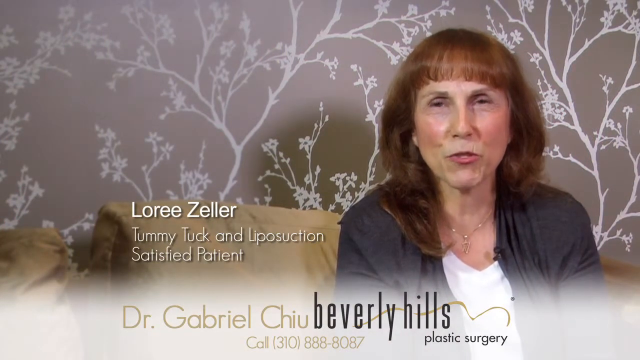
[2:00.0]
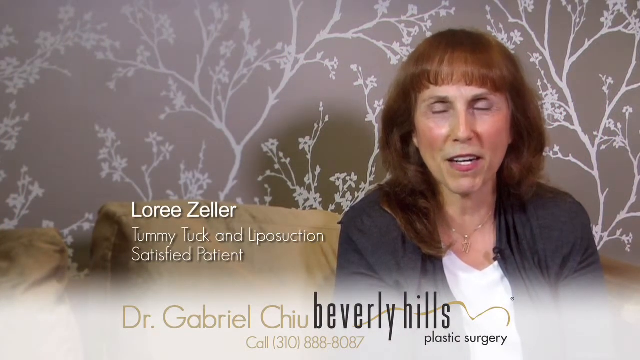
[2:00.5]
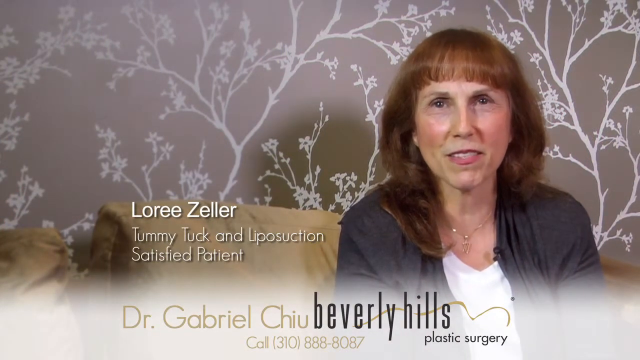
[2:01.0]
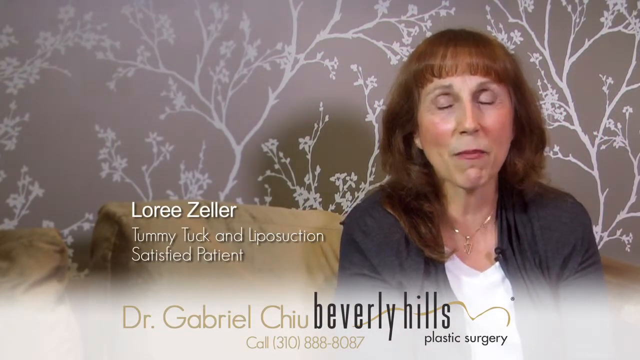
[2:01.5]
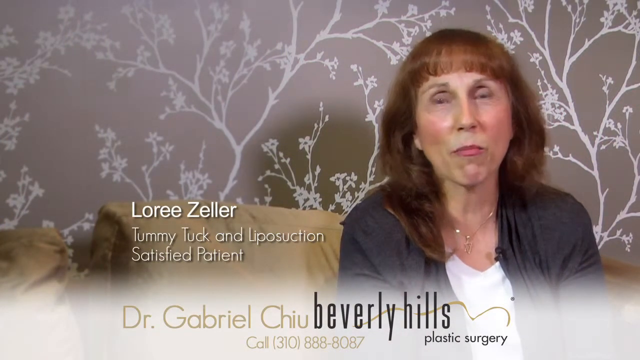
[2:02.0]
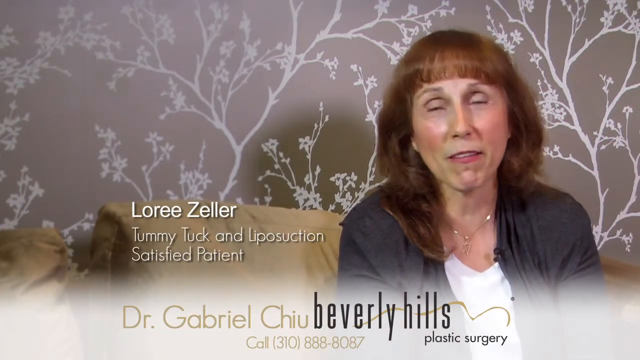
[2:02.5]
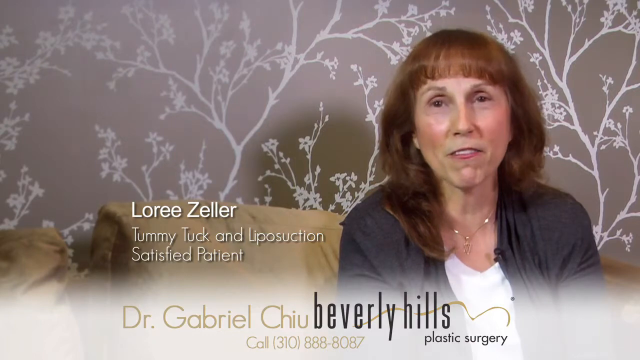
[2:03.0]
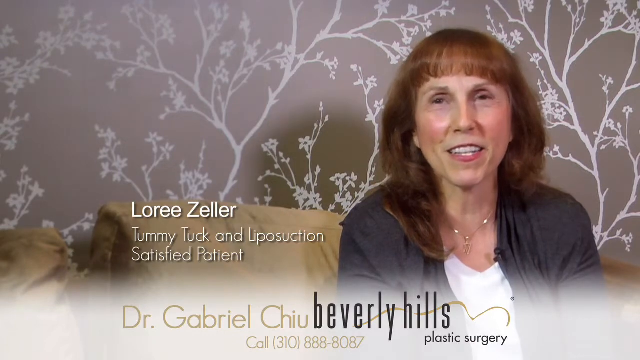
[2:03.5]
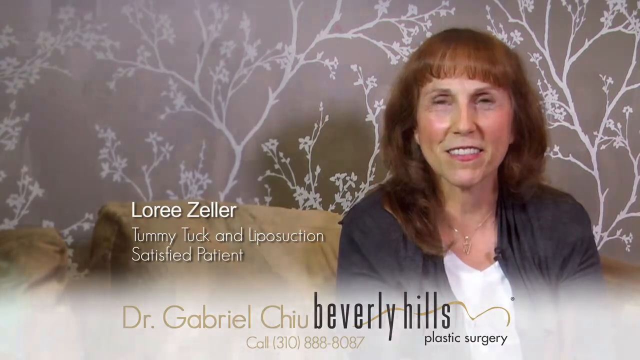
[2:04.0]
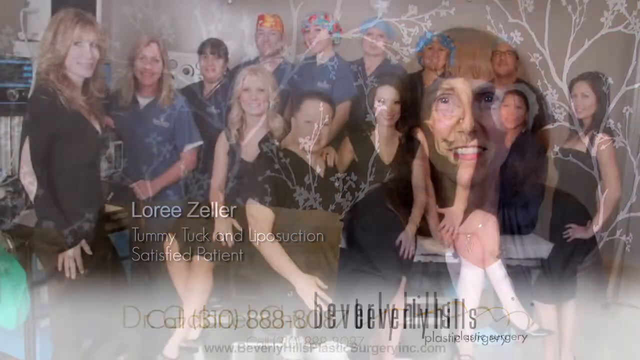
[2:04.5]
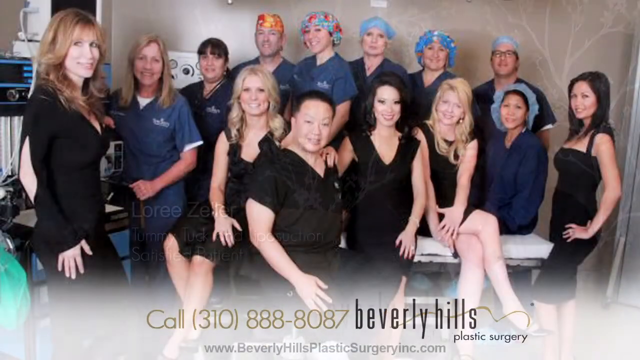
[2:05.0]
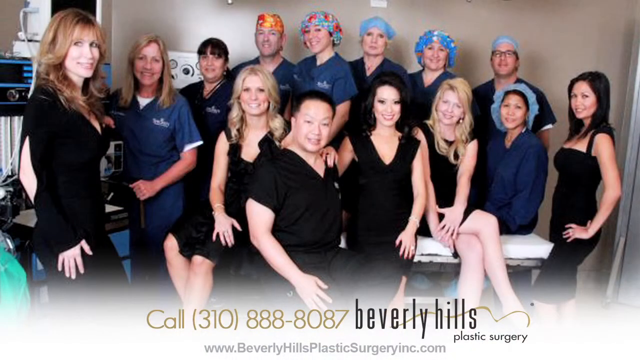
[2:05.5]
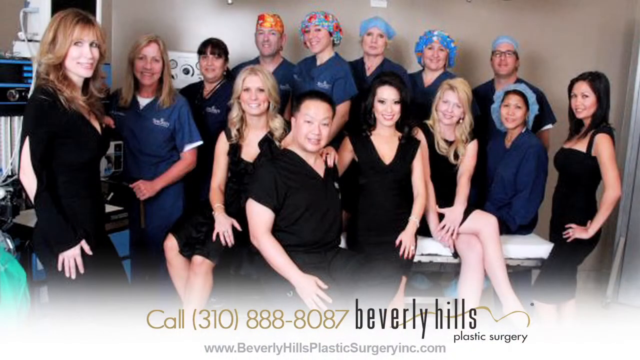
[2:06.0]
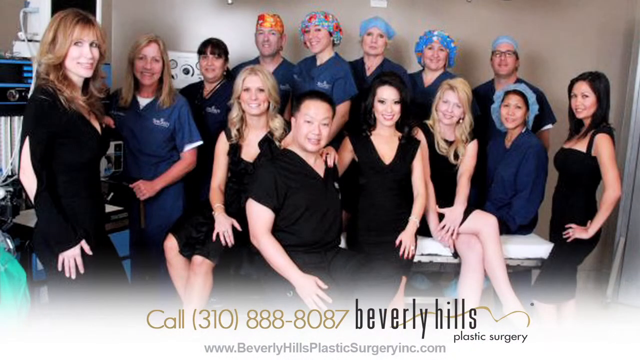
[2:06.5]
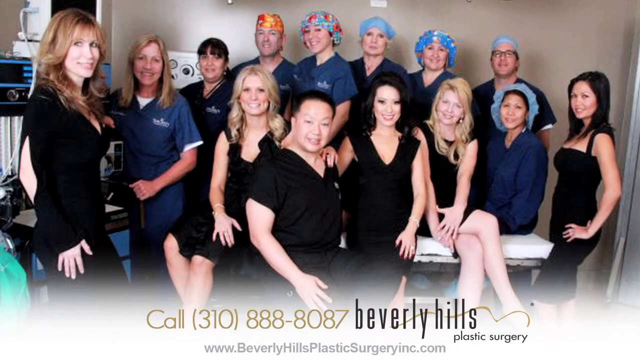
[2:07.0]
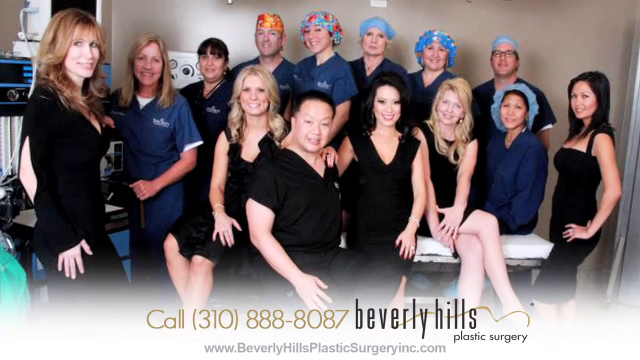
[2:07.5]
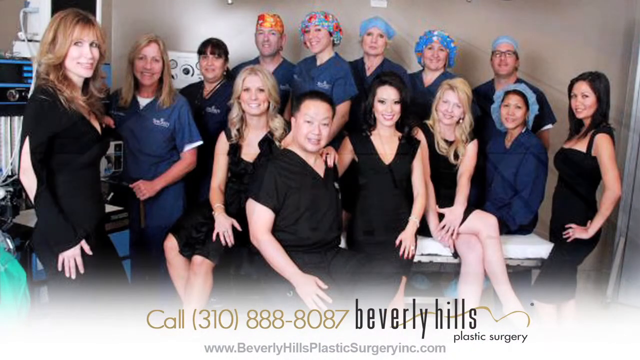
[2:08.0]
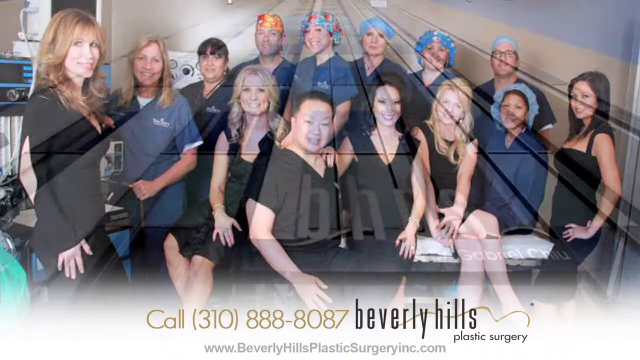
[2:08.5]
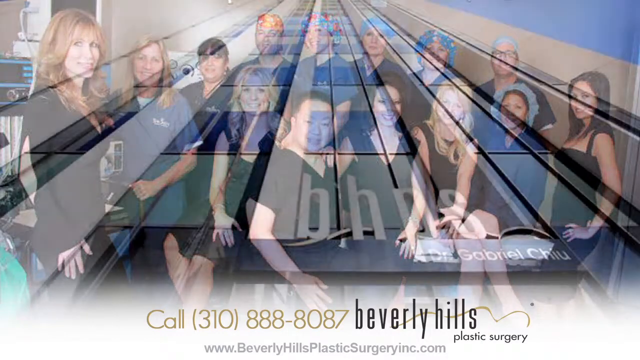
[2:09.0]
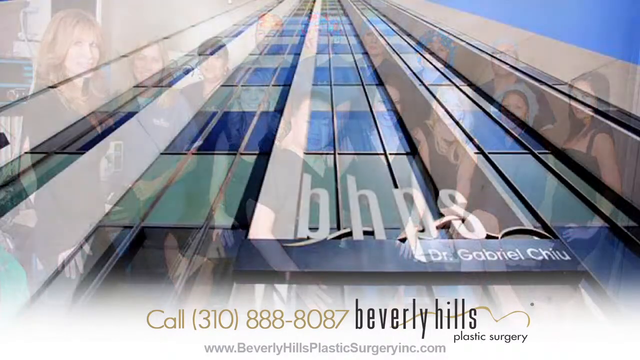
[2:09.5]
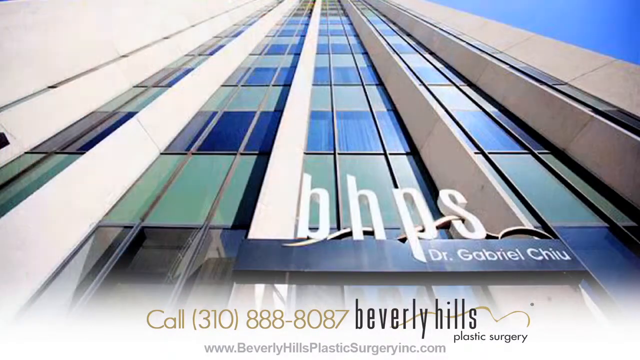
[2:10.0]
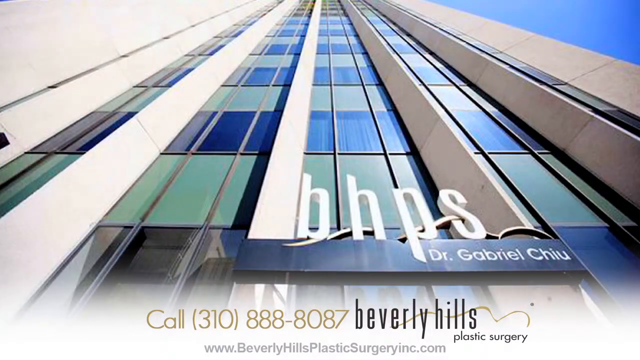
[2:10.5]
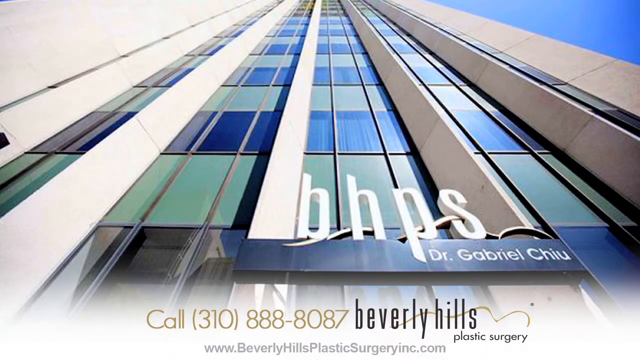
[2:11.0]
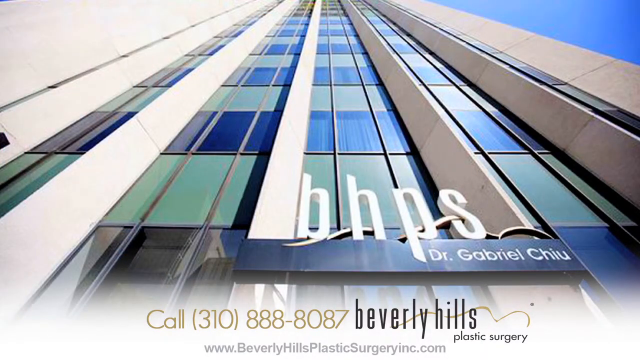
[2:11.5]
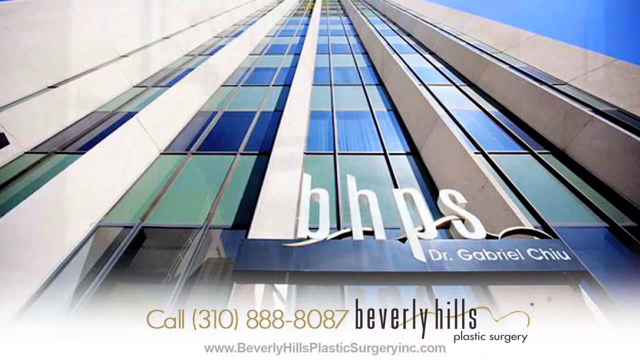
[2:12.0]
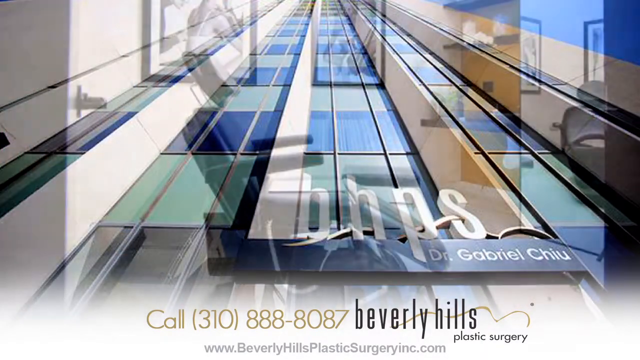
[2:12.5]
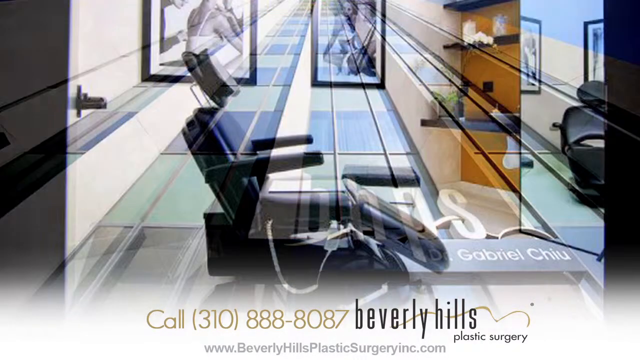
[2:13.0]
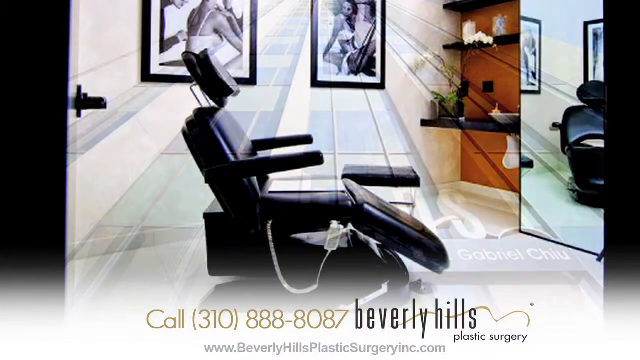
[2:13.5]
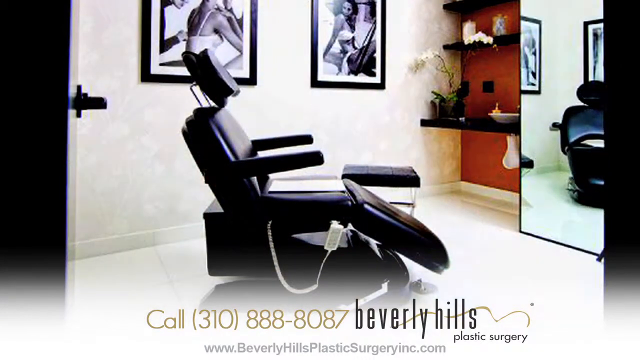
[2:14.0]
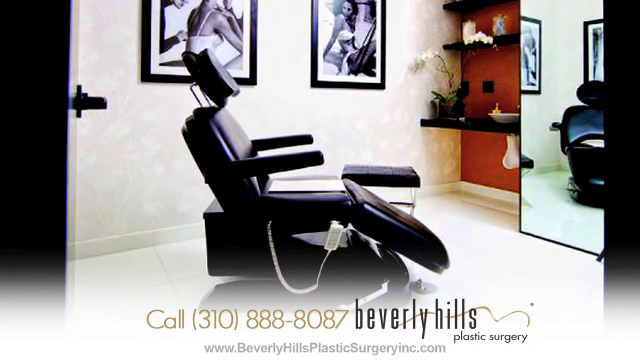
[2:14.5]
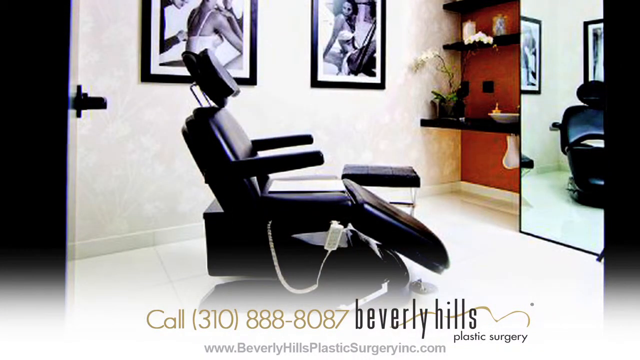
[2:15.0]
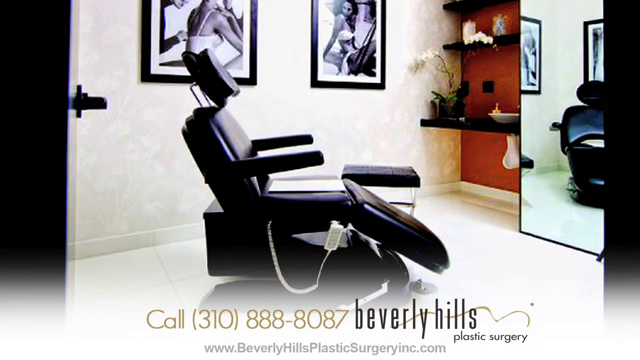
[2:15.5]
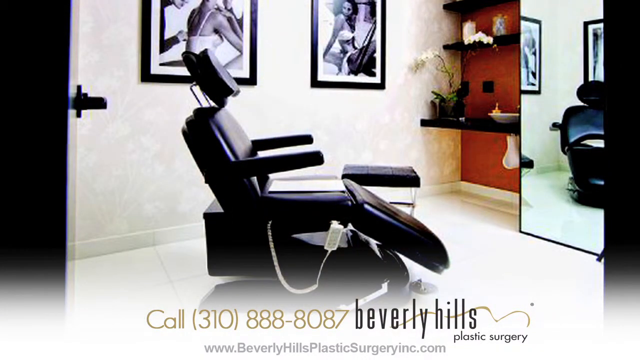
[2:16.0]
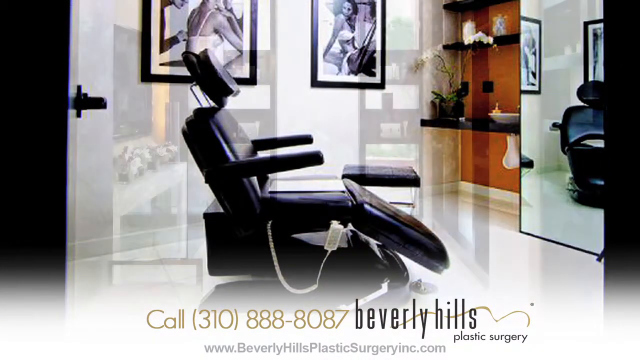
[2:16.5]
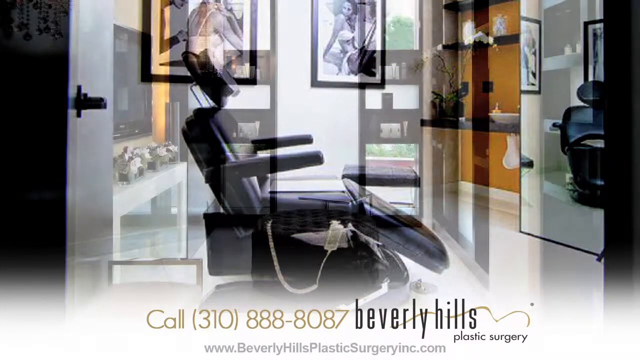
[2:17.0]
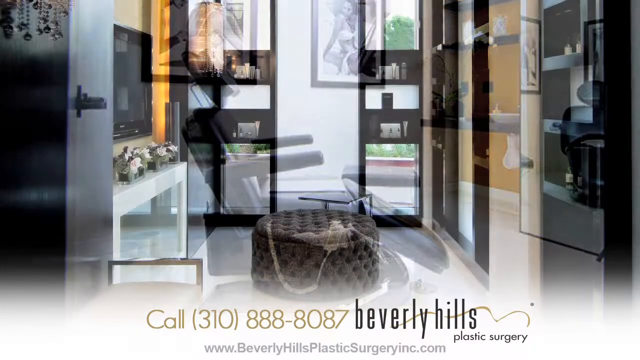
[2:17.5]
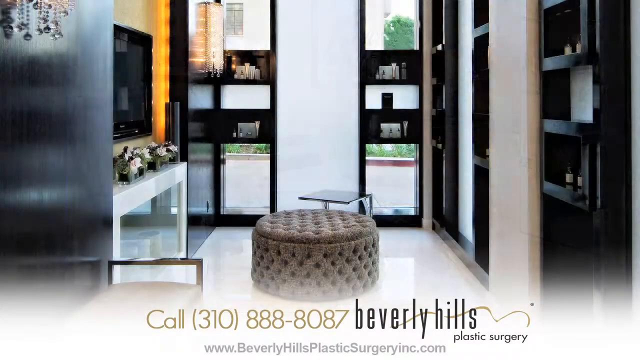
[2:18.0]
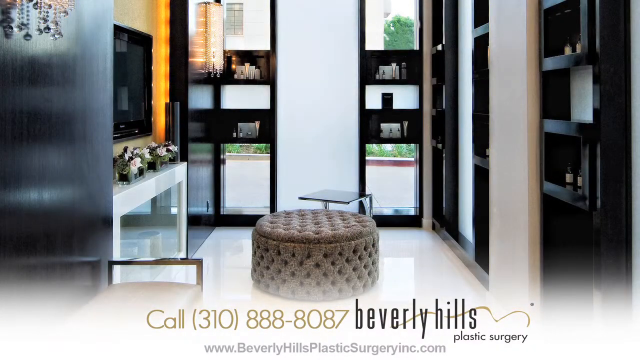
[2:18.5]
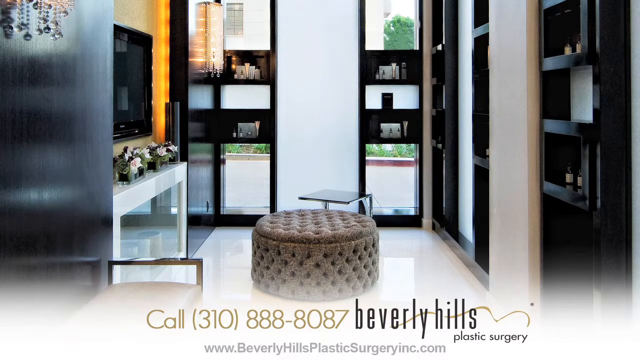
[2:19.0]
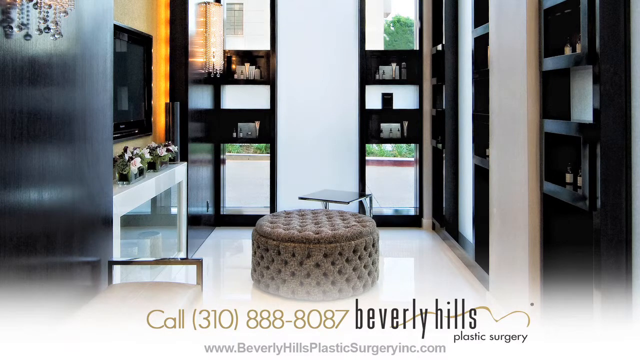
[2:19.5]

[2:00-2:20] Lori Zeller talks further to the camera, smiling. A gradient transition leads to an image of 11 women and three men, including the main doctor, Chiu; this appears to be the clinic's team of staff. Next is a shot of the outside of the building, a high skyscraper-style building with lots of floors, with the sign "BHPS Dr. Gabriel Chiu" at the front. An image of a chair inside the clinic follows, then another room with a small table, a brown seat, lots of black shelving around, and some windows.